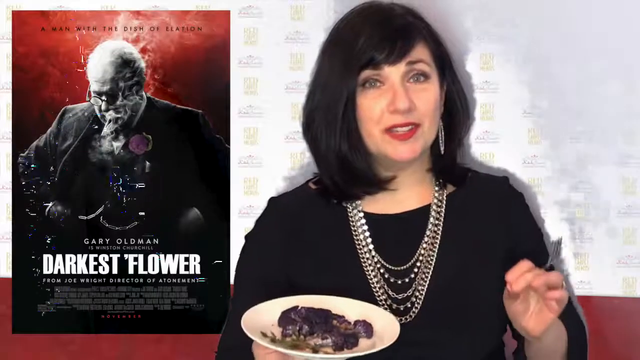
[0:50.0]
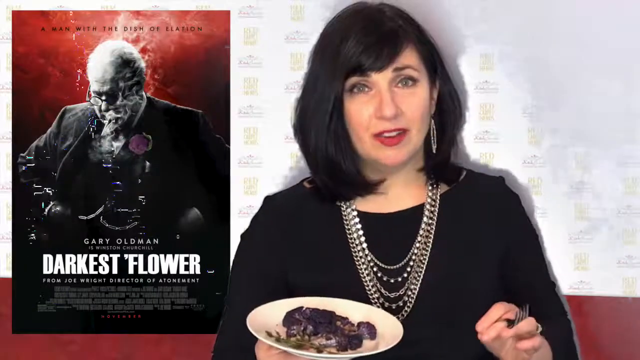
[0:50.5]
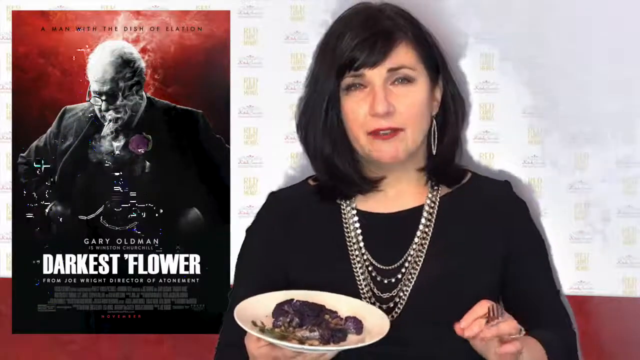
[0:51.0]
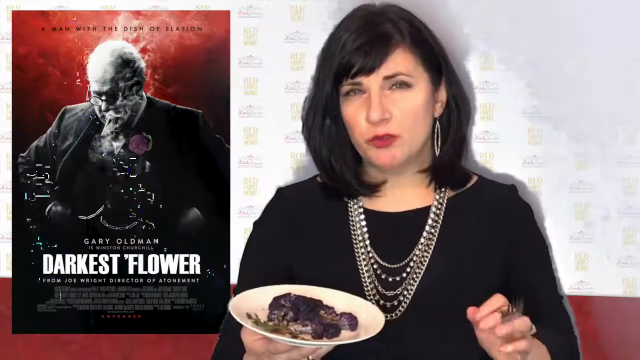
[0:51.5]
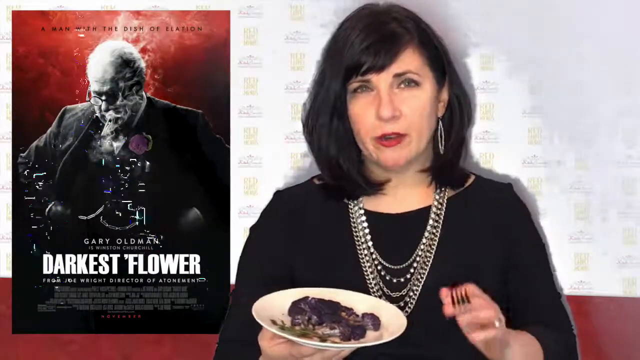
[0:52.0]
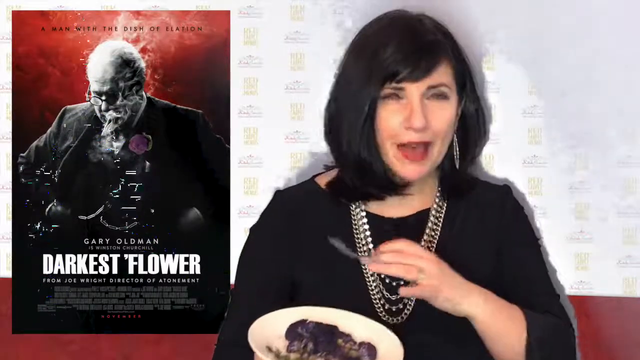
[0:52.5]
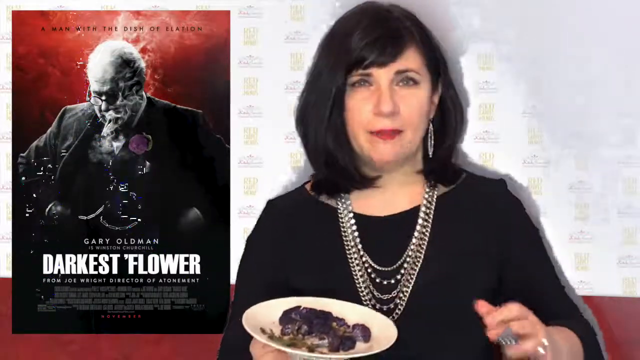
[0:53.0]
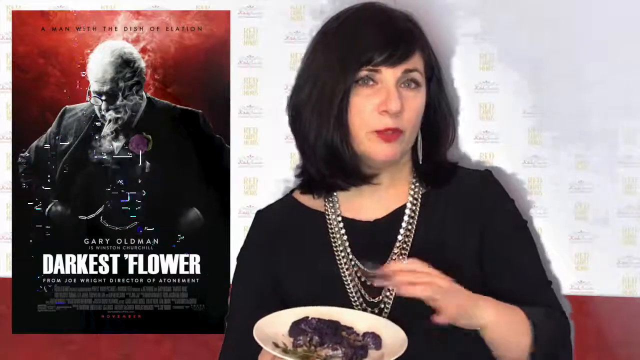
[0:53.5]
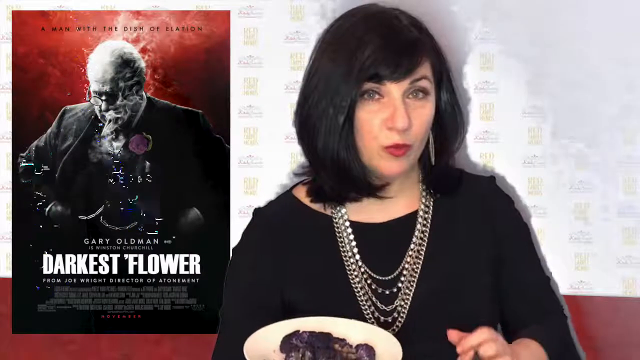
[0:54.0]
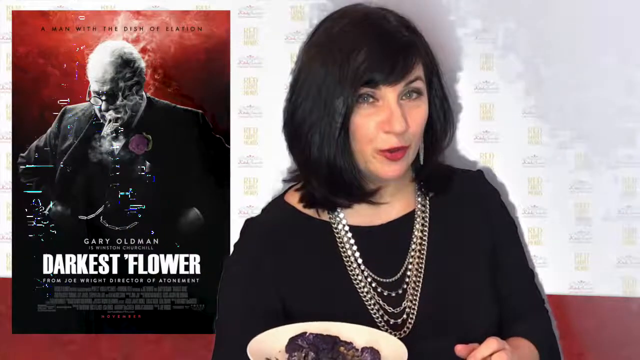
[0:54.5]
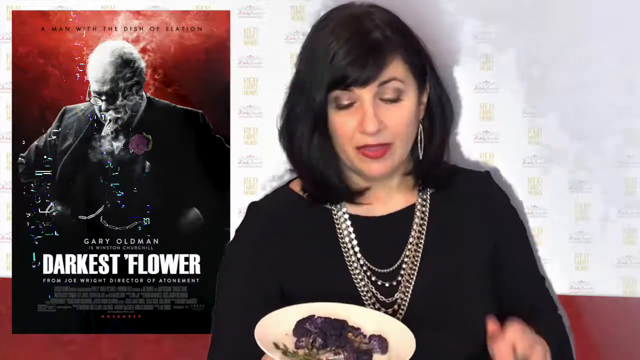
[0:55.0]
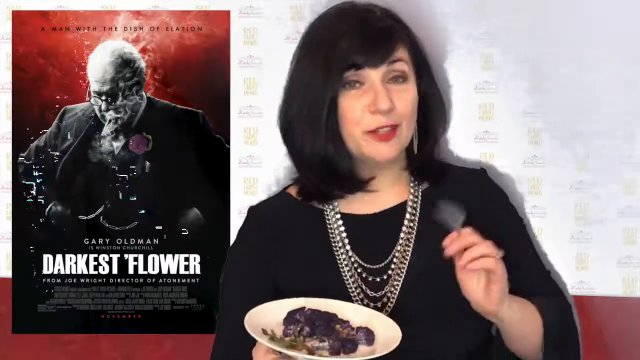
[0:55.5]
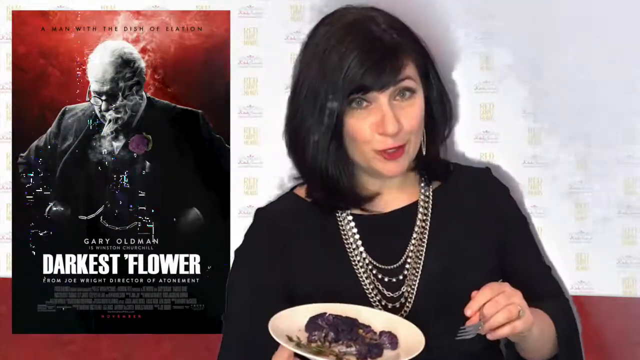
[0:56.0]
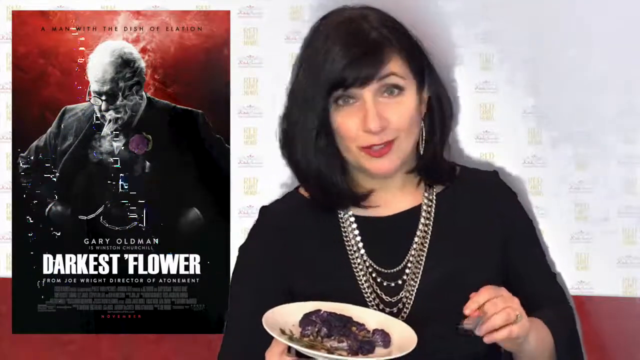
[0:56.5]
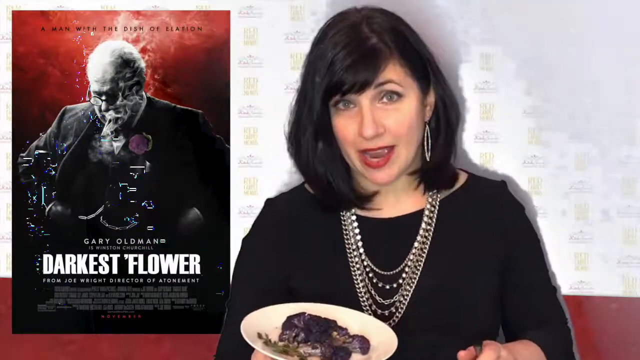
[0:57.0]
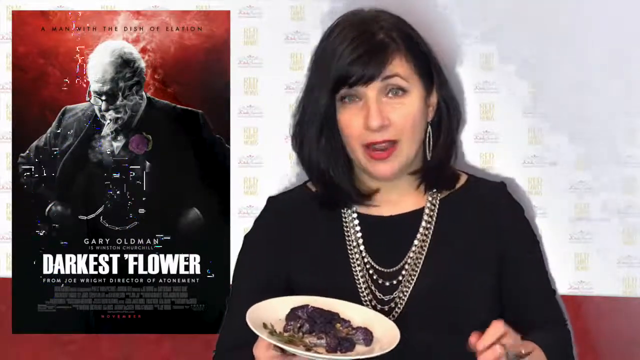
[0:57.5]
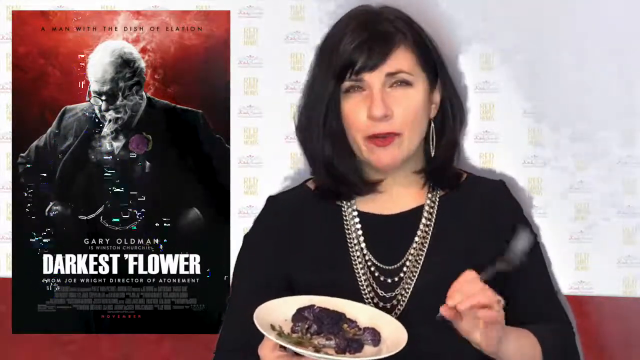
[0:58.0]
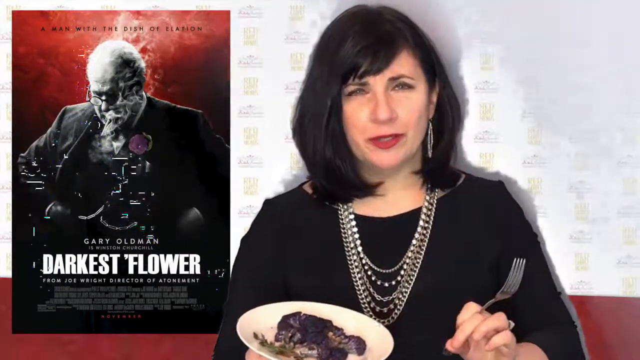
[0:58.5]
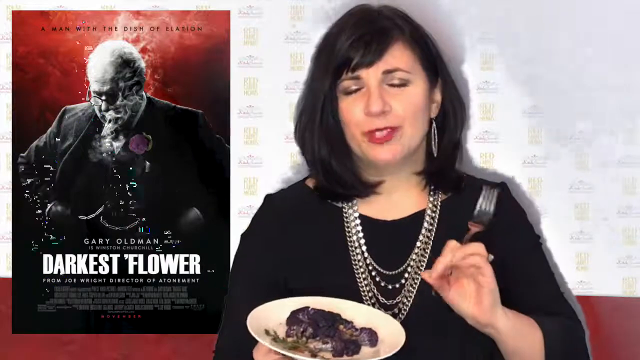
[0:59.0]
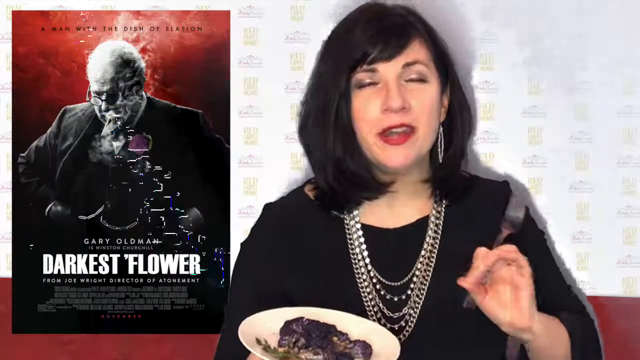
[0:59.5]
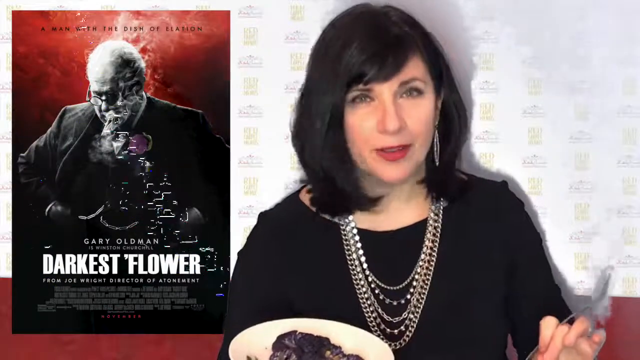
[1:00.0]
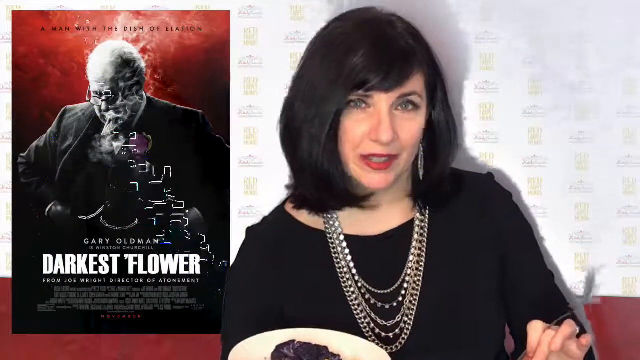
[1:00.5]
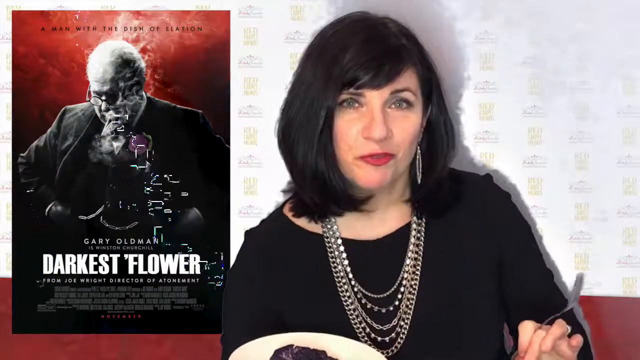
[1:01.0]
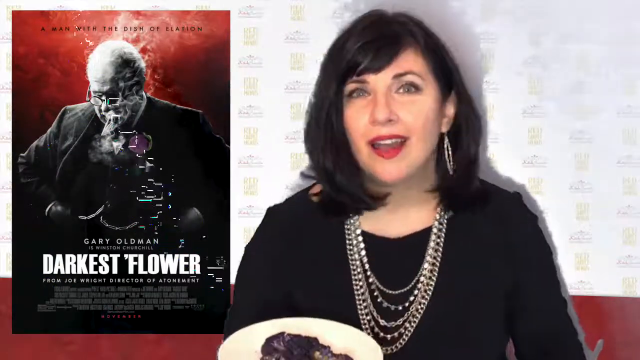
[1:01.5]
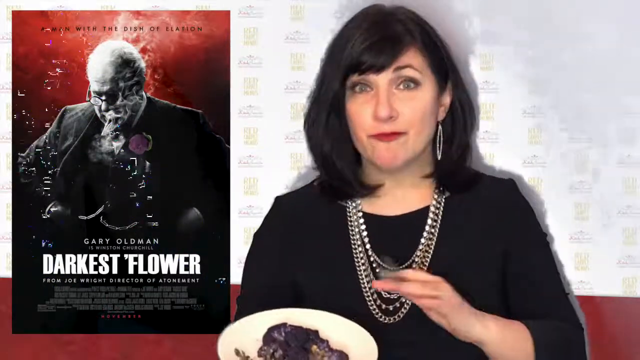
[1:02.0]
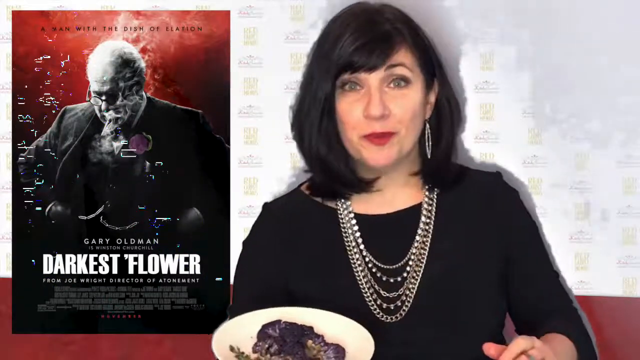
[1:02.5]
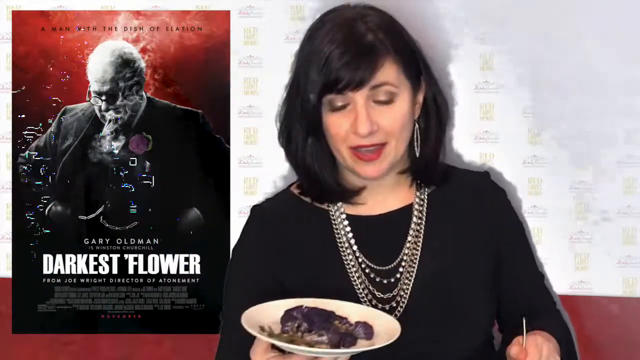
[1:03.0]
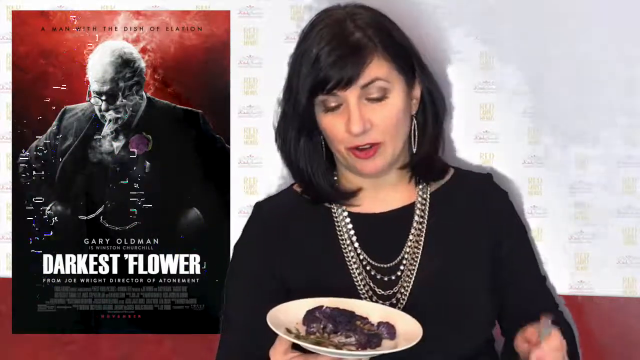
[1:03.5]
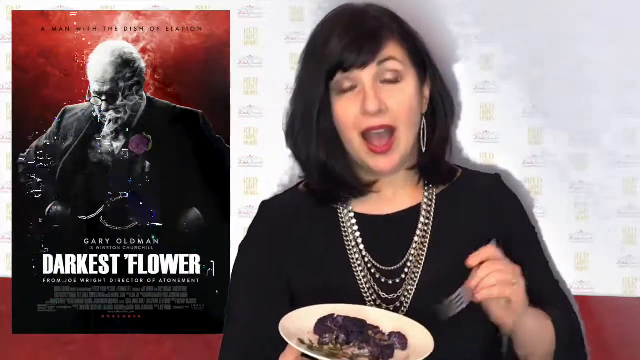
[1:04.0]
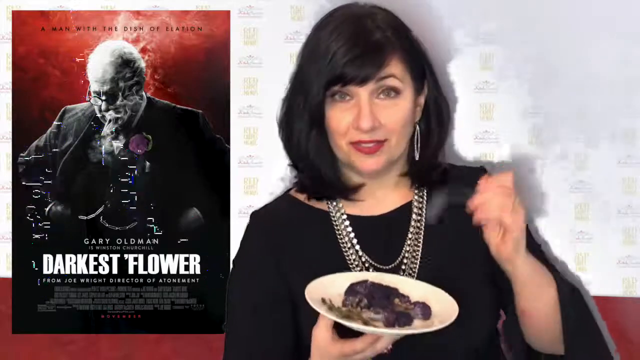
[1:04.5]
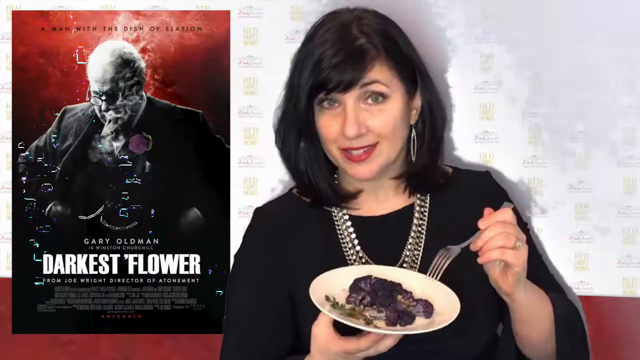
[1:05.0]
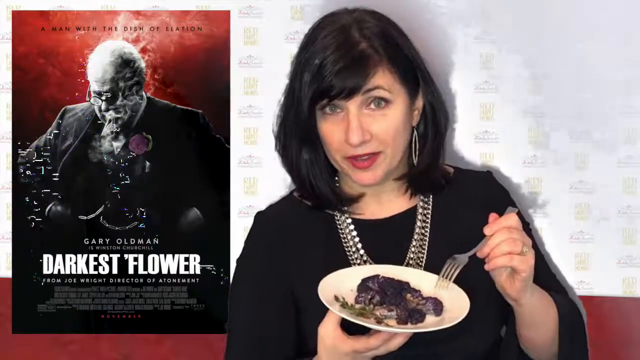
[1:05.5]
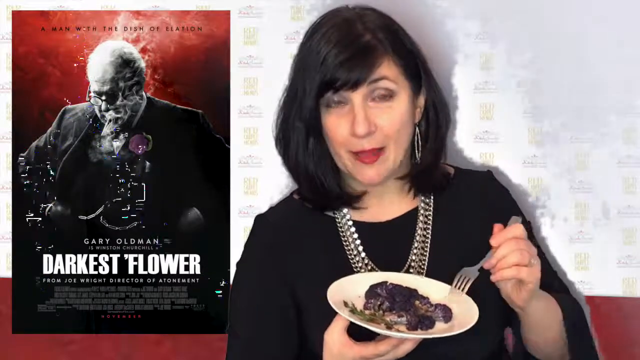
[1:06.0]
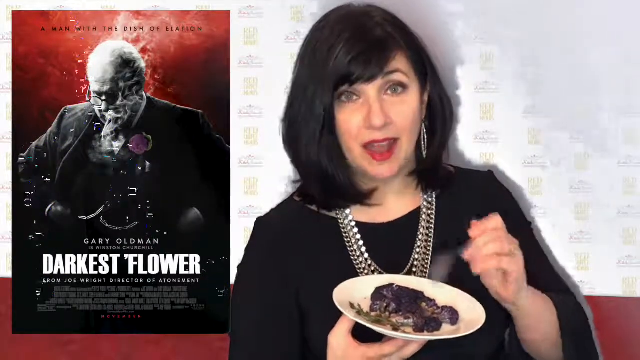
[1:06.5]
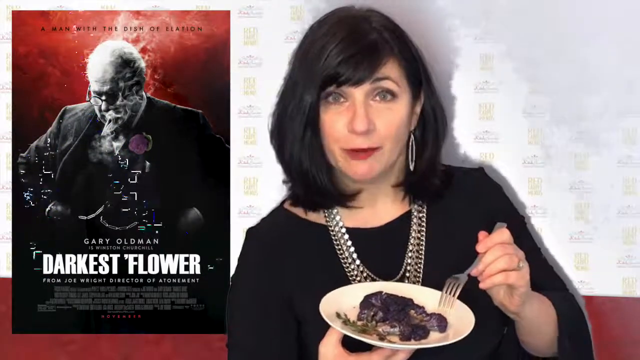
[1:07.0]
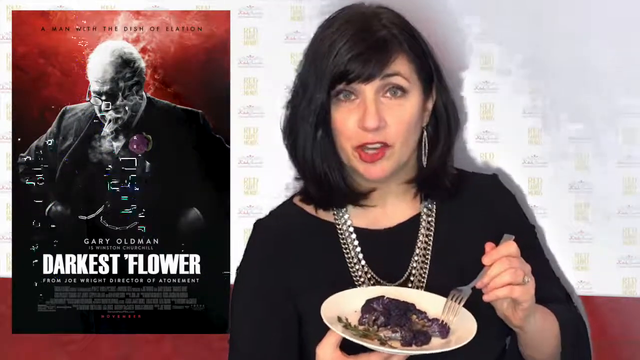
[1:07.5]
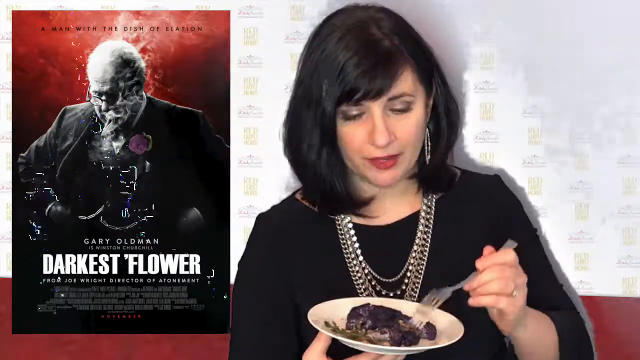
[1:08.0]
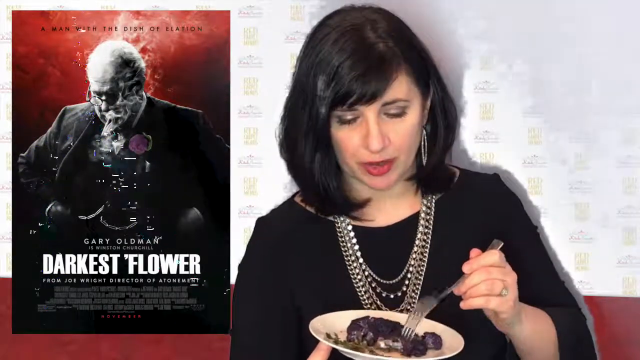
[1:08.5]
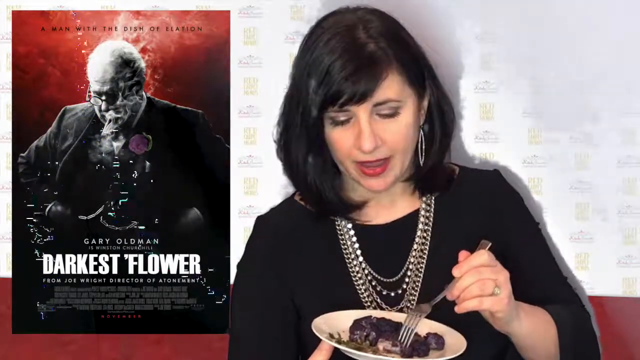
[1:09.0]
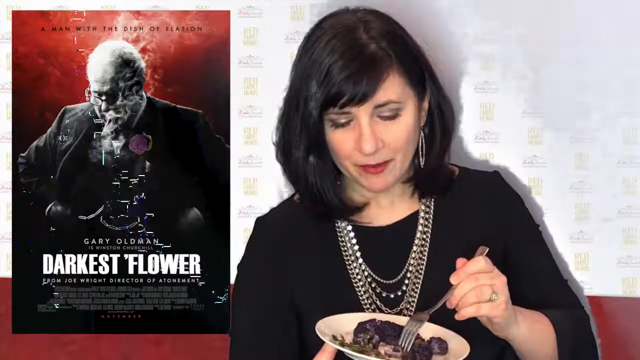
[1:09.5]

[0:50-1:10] The poster, the purple cauliflower florets and the woman appear next to each other against a background that seems to look like a red carpet. The woman is Caucasian, approximately 30, with a black dress, necklaces, large earrings, short black hair and red lipstick. The poster shows Gary Oldman as a static figure: a kind of old, 60- to 70-year-old man with glasses and a black suit, with kind of smoke near him. Some weird artifacts over the poster and in the top right of the frame create static fragments in the image. The screen does not change; the florets are in her hand and on a plate while she talks. She takes a fork to some of the florets and probably is going to eat them, and she eats the cauliflower at the end.